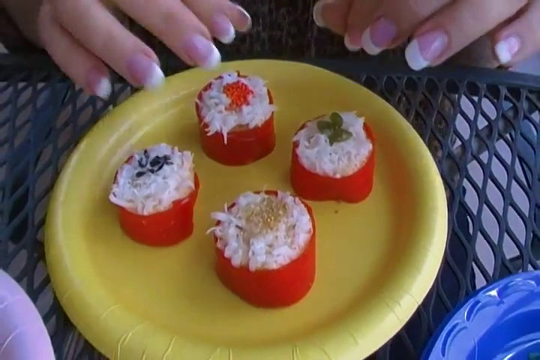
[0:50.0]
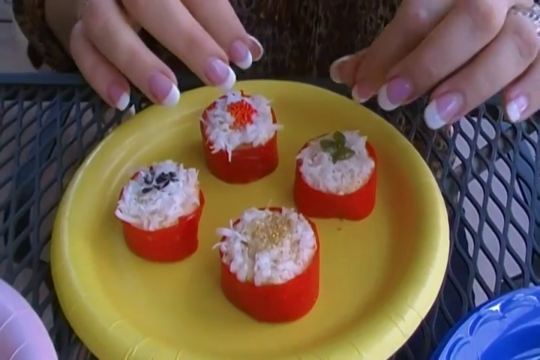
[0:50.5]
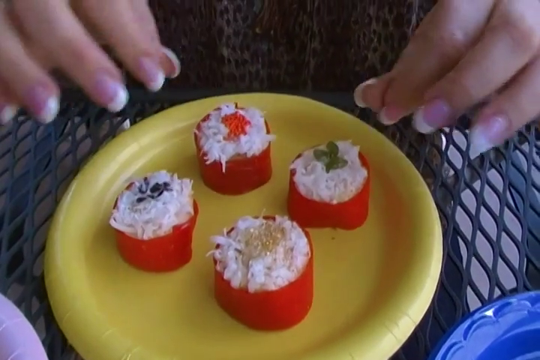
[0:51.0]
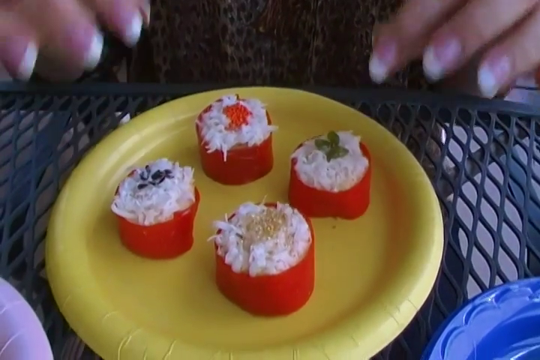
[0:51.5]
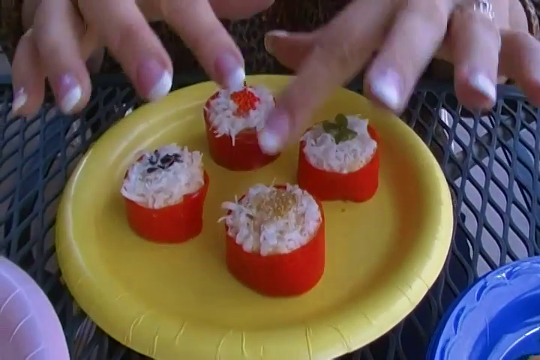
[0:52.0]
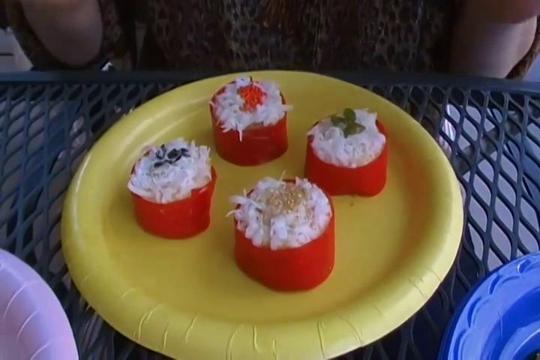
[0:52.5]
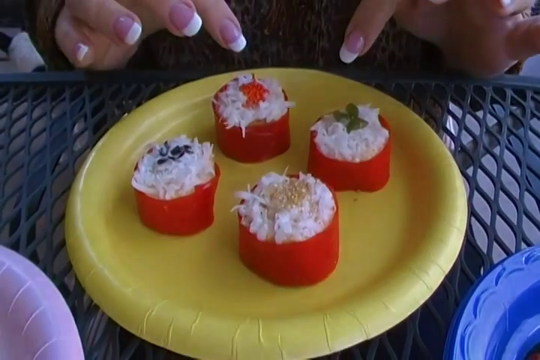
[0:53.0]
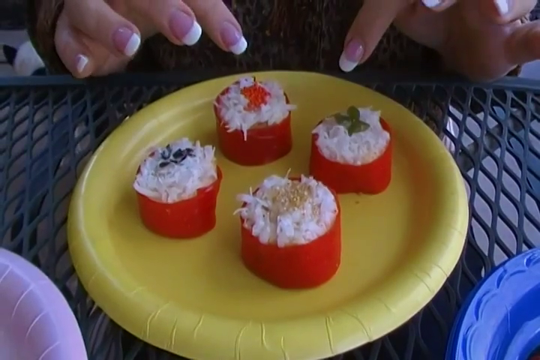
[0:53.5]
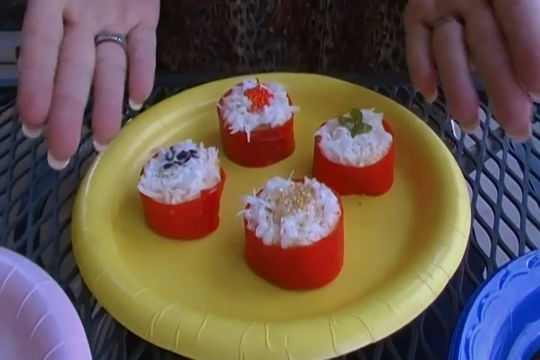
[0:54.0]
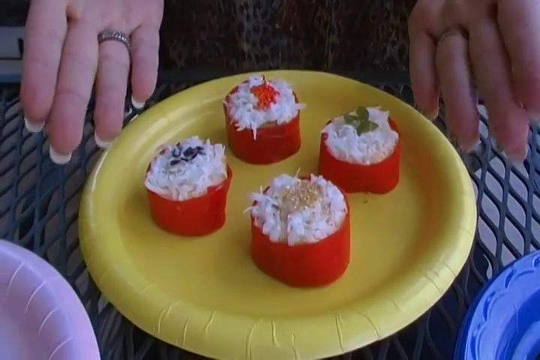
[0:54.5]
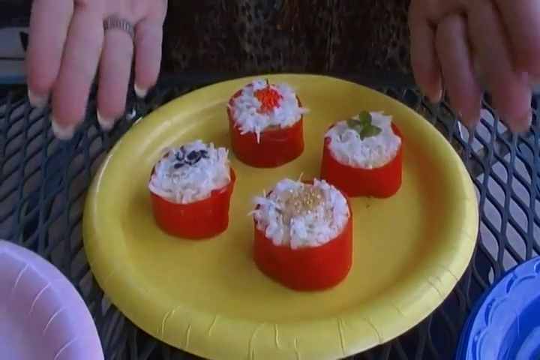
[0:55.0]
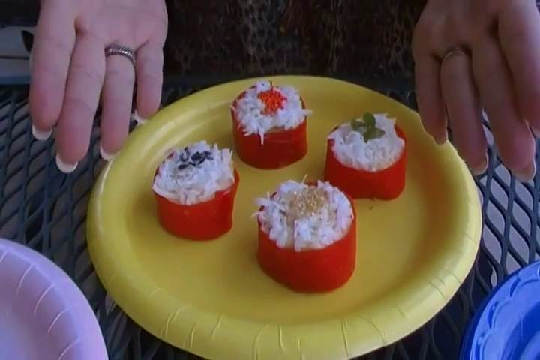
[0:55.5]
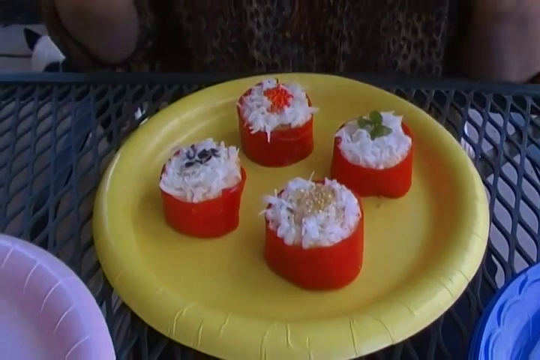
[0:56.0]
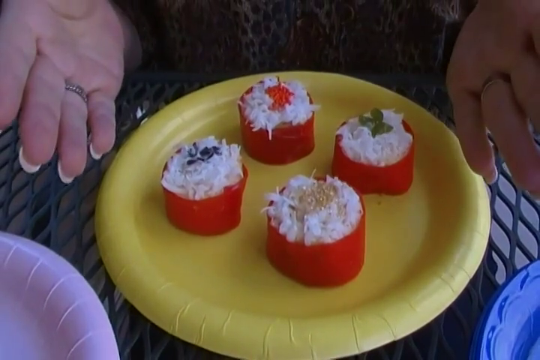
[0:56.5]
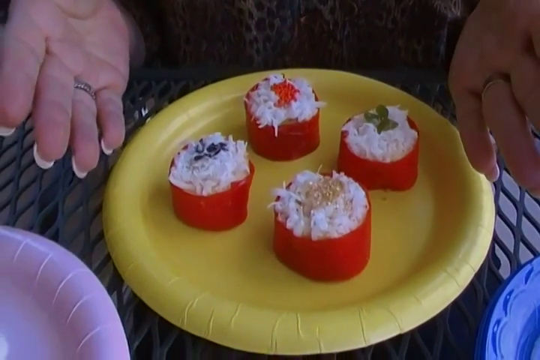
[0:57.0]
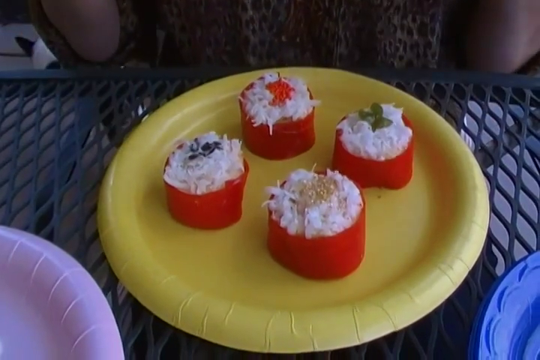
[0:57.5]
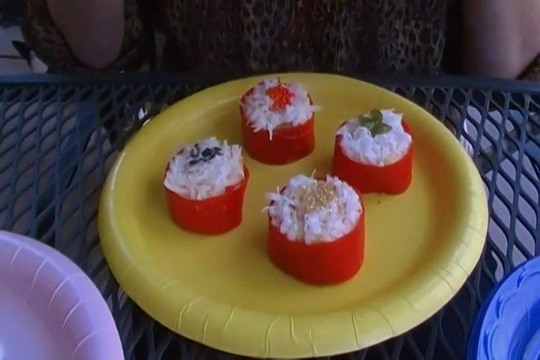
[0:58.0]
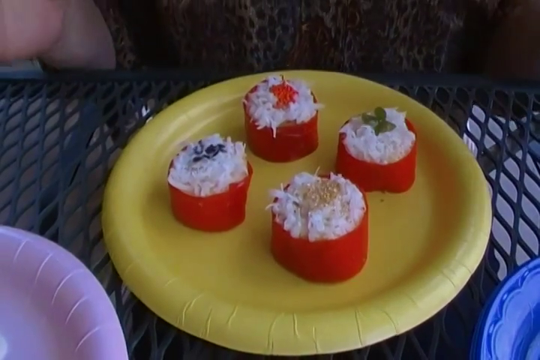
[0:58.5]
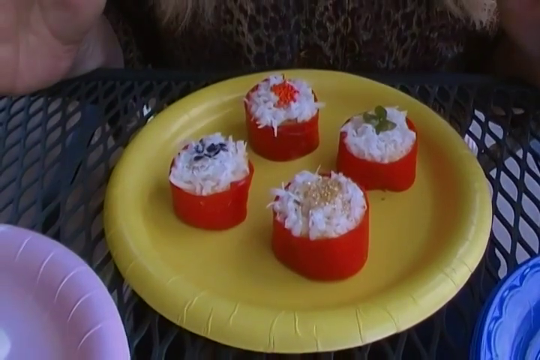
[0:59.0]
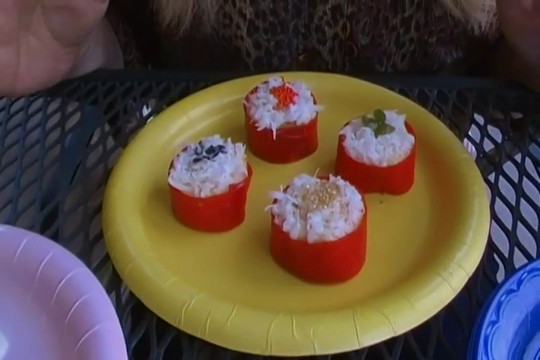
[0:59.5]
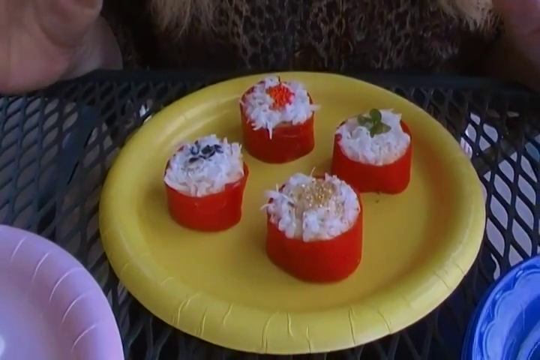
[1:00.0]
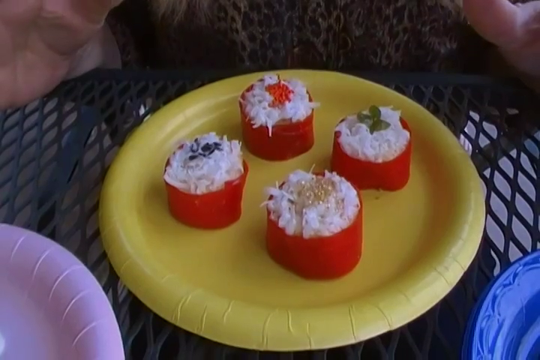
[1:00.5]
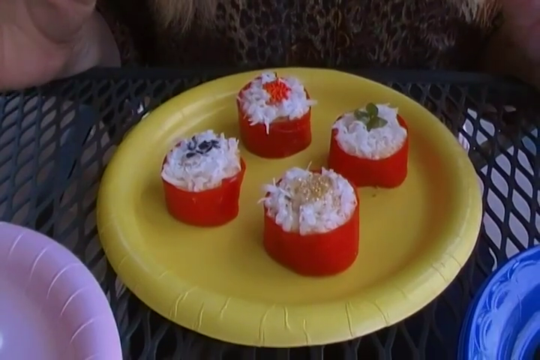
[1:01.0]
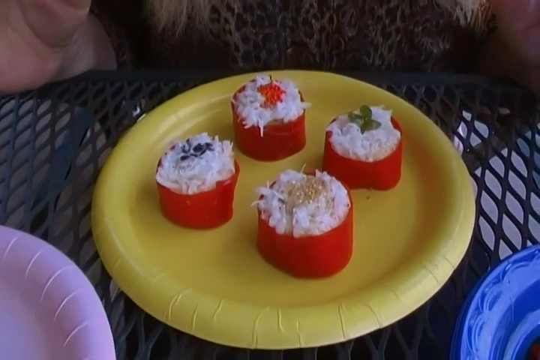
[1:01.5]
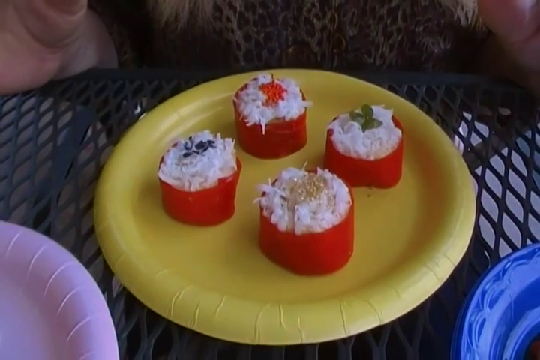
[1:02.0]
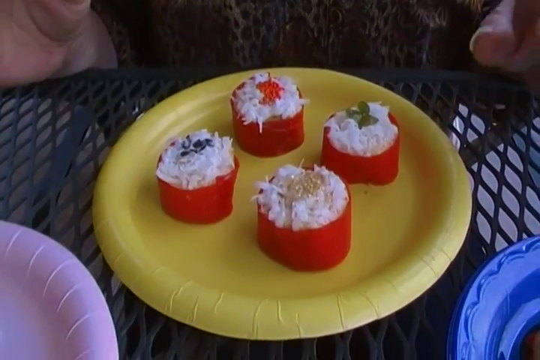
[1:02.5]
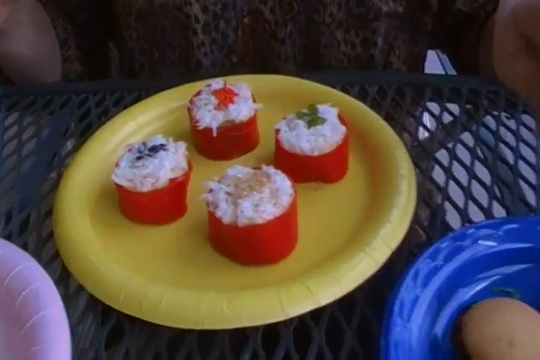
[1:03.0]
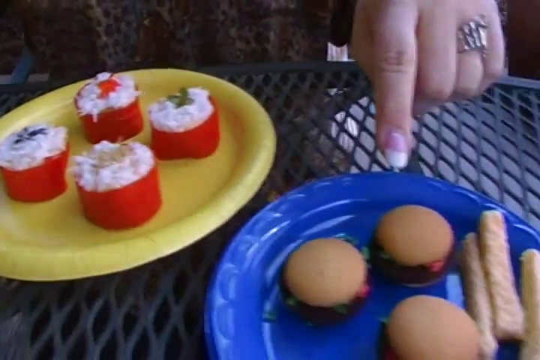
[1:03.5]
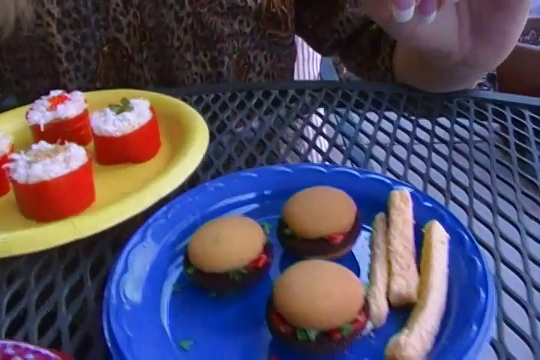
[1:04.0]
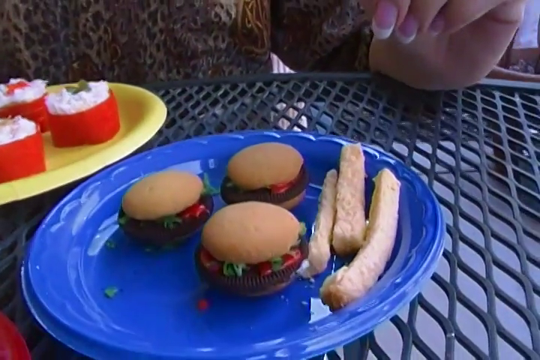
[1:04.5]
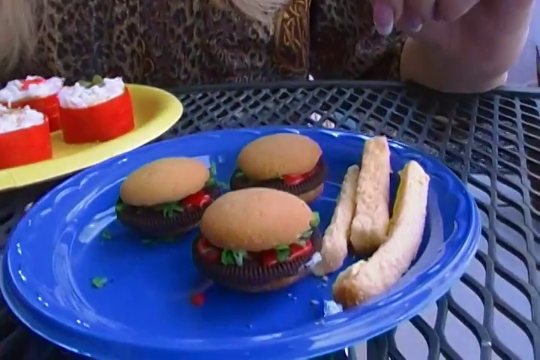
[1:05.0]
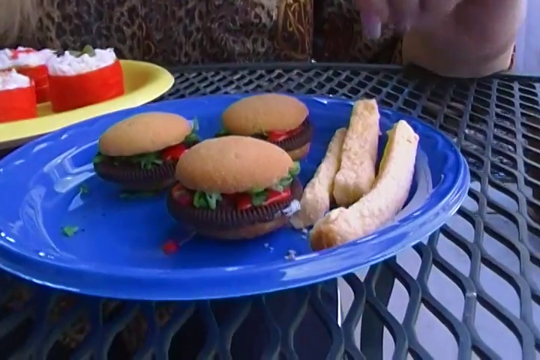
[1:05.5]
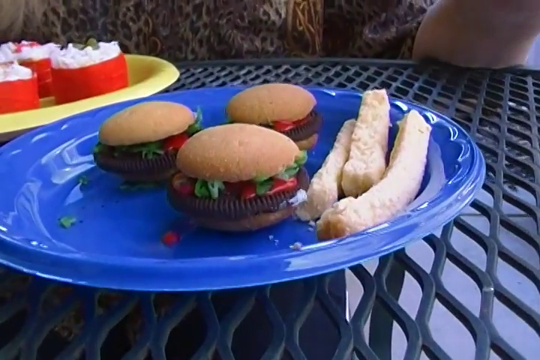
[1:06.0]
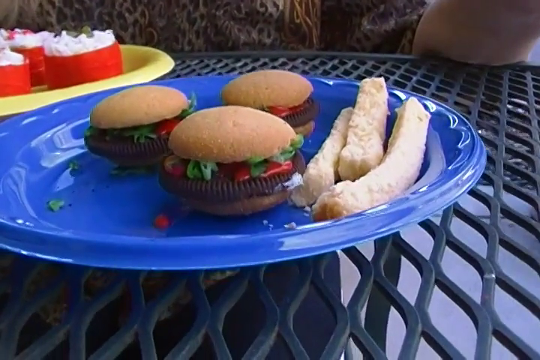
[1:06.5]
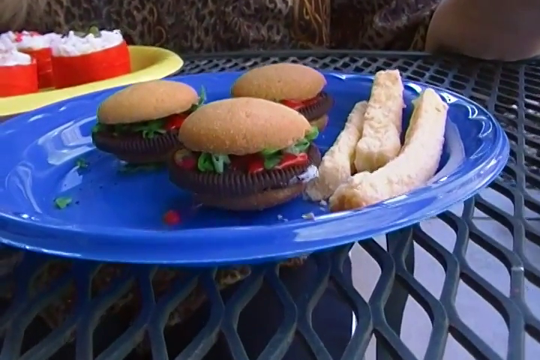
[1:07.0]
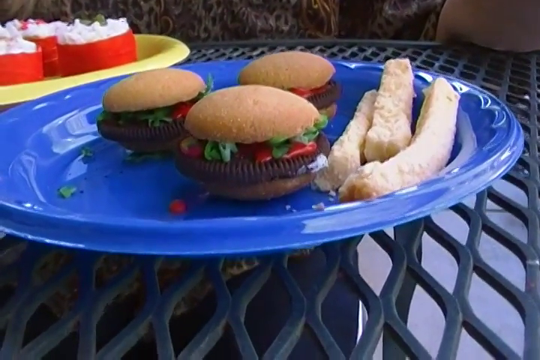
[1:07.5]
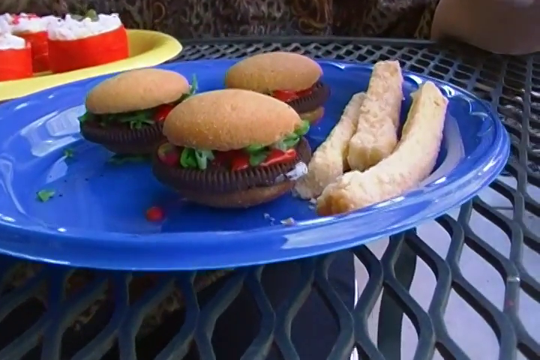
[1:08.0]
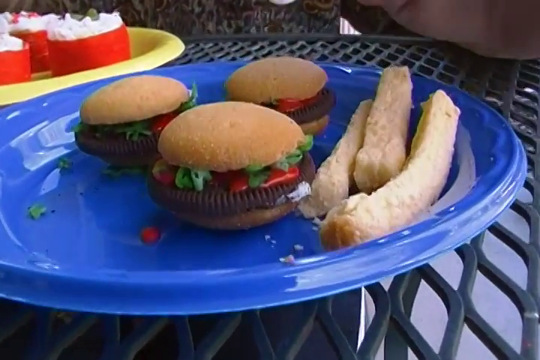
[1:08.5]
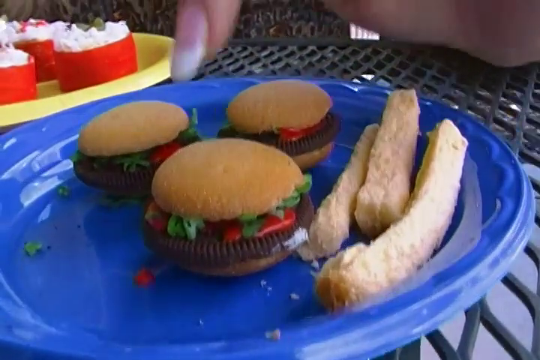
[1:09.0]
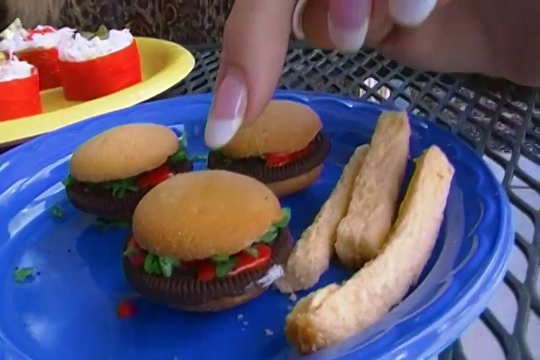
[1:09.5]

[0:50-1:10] The woman is still talking about the four little items inside the red cups. She then moves to the next plate to the right, which is on top of a blue plate and holds what look like mini hamburgers or mini sandwiches. Next to the sandwiches are three sticks or something similar, maybe chicken or fries, right next to each other. The burgers have an unidentified green and red topping; green and red bits are all over the plate and entirely underneath the buns, apparently some type of topping.